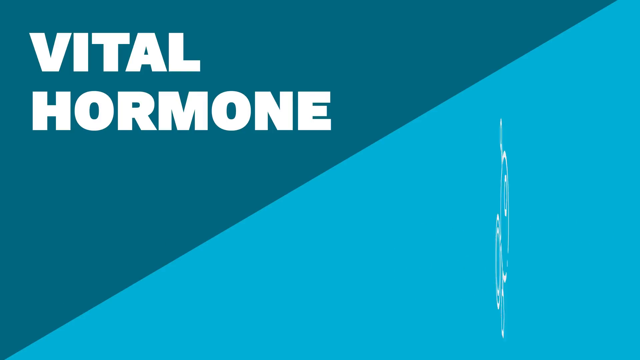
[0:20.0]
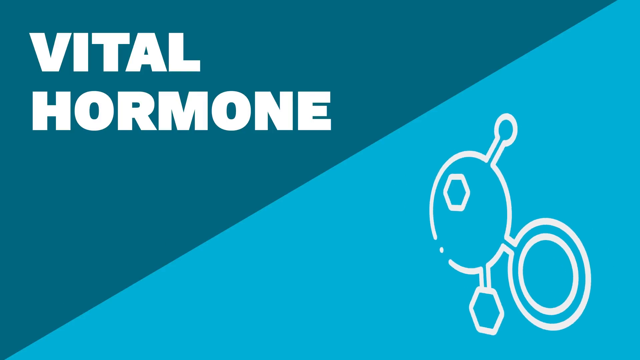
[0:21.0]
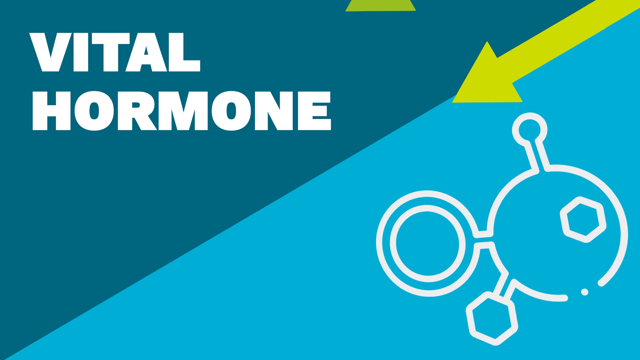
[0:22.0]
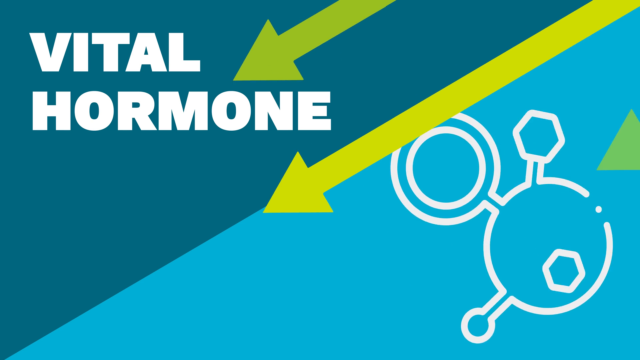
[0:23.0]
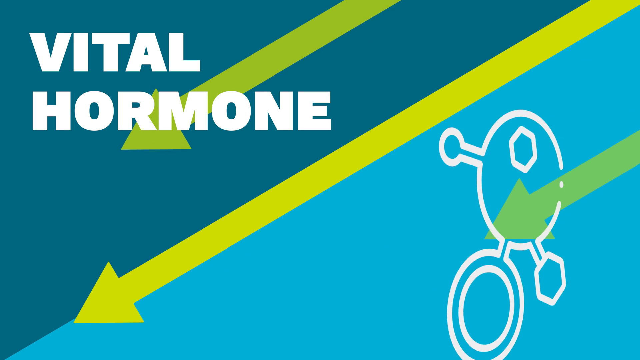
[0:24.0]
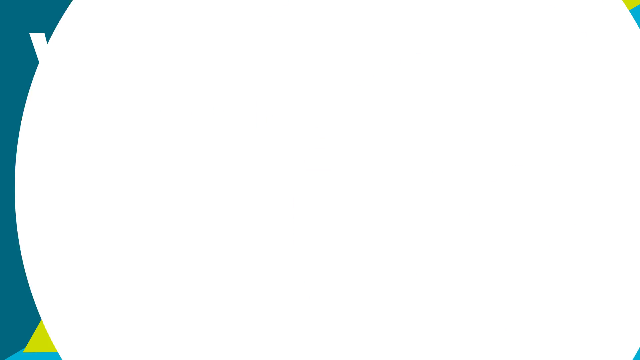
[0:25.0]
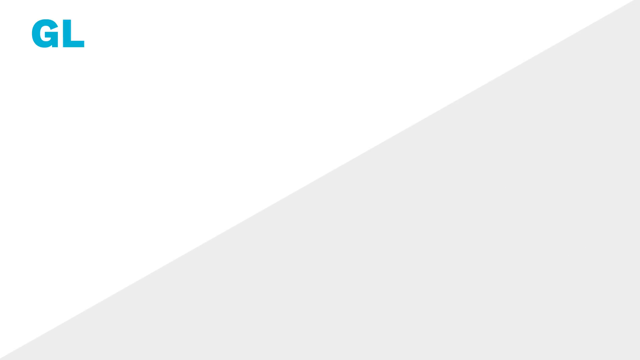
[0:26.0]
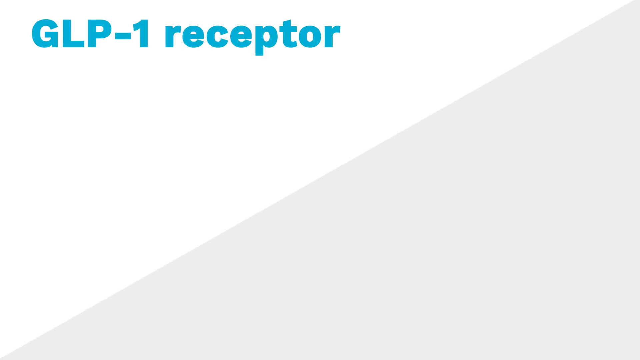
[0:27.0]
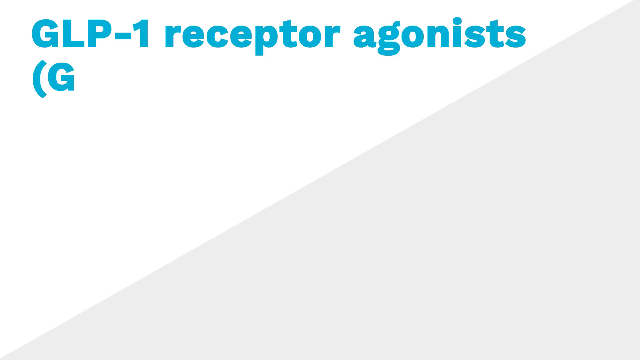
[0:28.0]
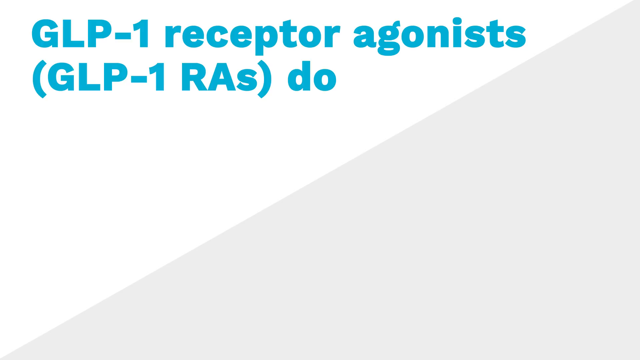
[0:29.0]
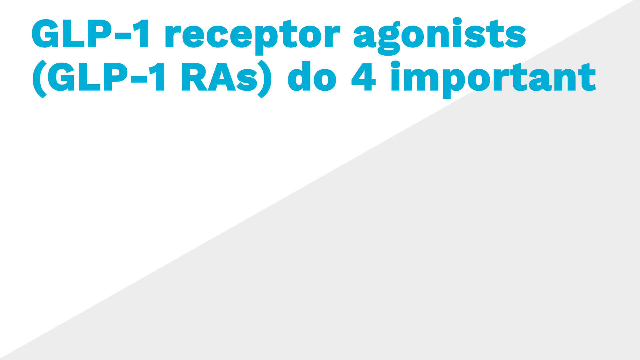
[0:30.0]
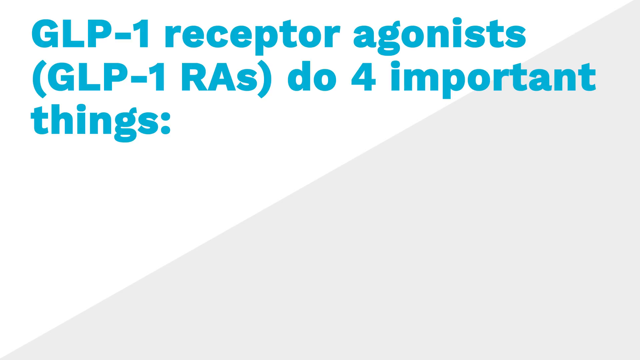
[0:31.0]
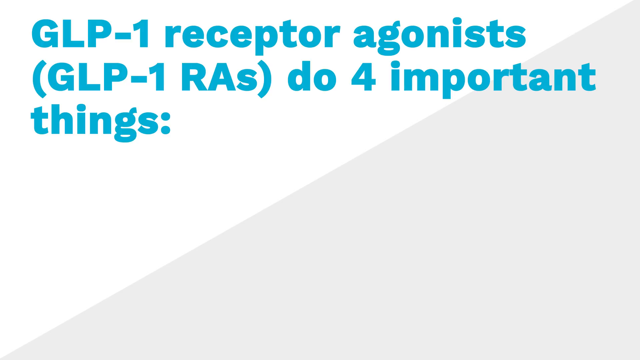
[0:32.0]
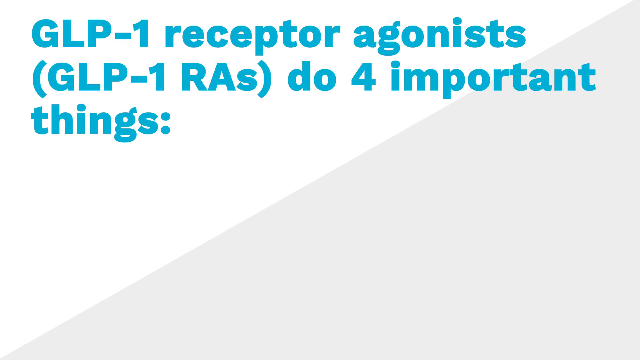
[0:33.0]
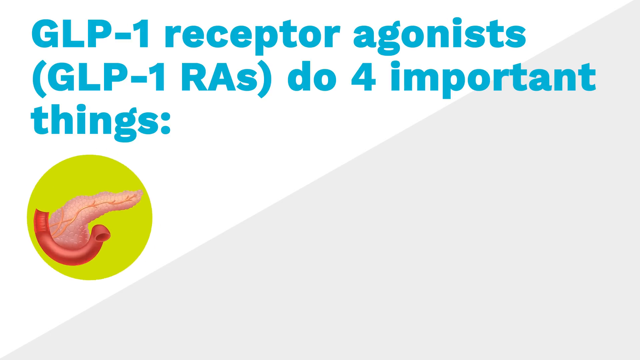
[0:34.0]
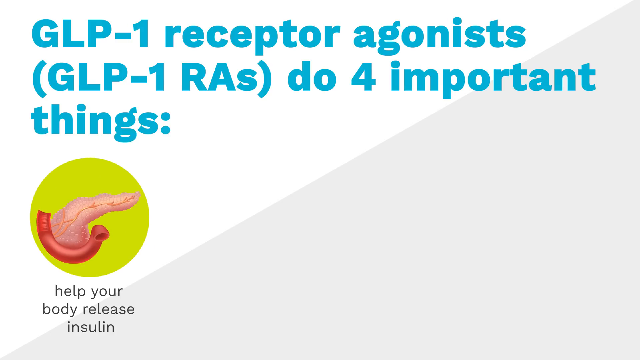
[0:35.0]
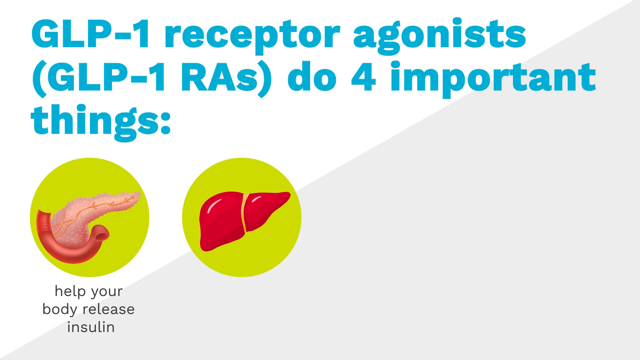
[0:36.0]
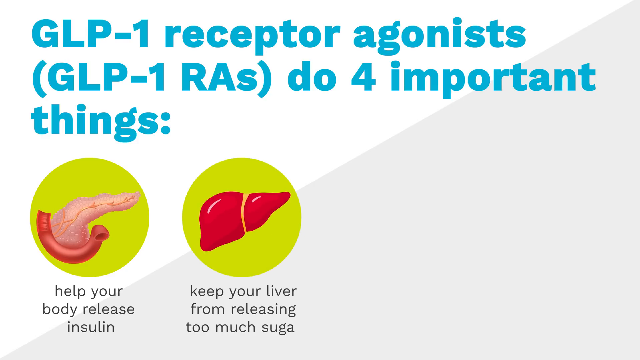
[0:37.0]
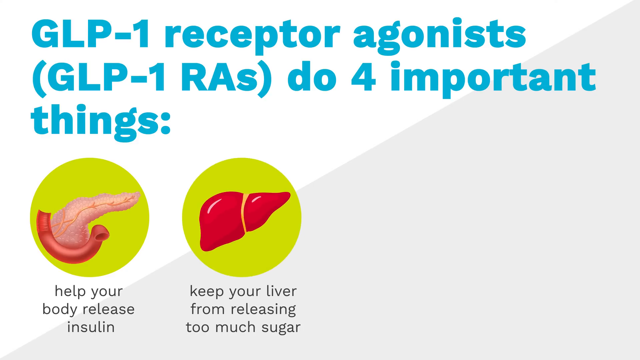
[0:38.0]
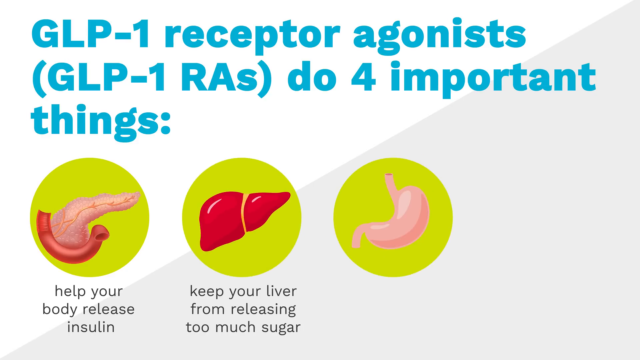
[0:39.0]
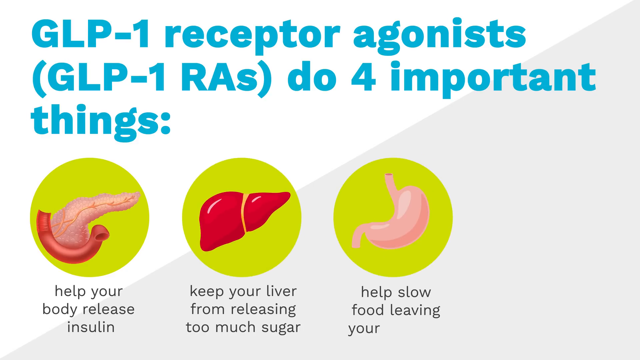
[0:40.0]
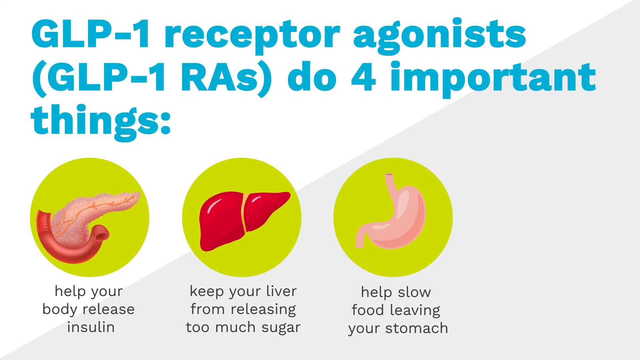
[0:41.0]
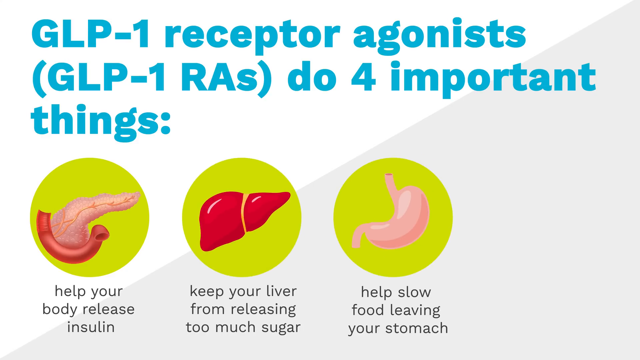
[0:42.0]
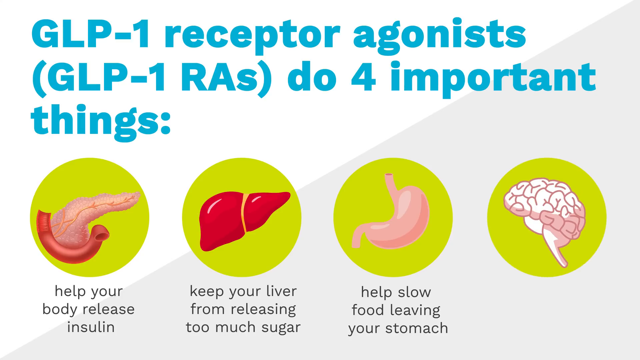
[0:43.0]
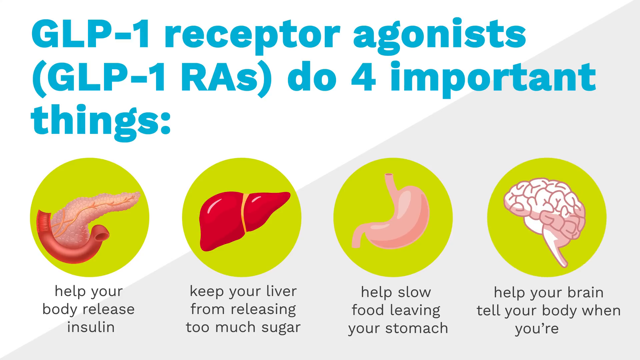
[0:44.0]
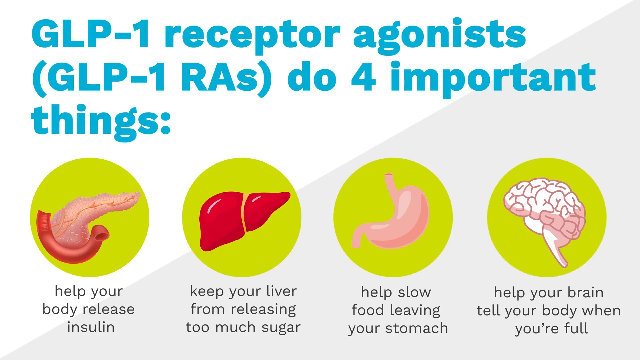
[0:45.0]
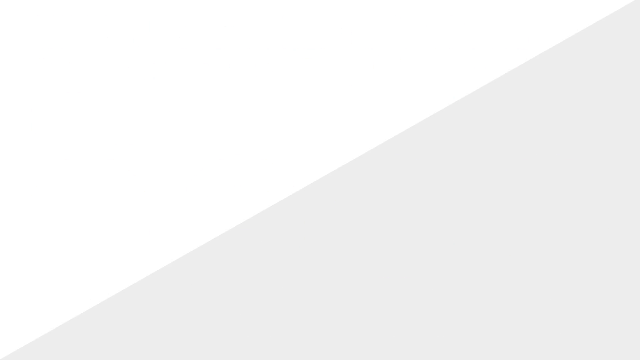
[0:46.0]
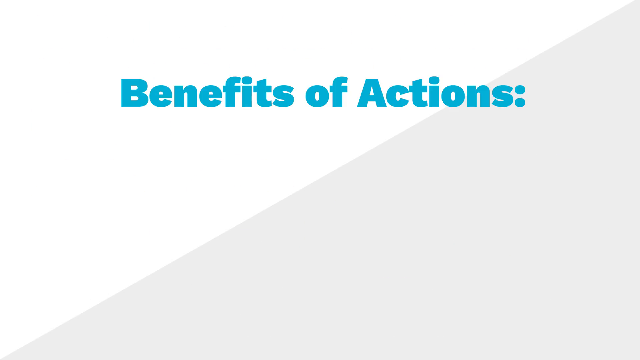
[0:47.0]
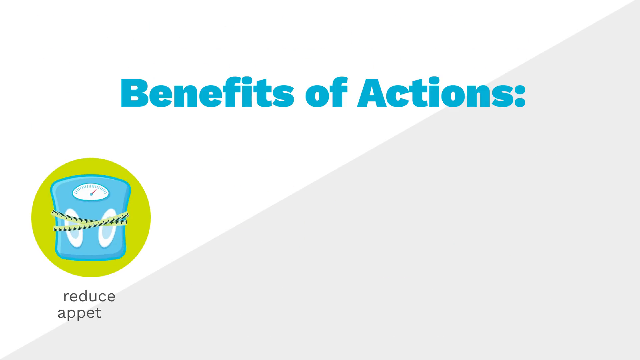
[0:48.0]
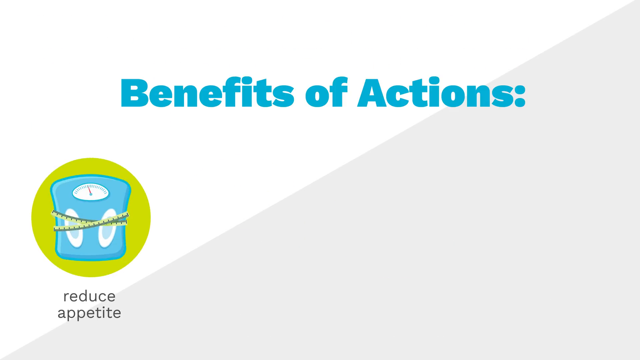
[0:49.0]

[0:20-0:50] The "vital hormone" slide is followed by animated yellow and green arrows that point from top right to bottom left and appear to move across the screen from right to left. The video then cuts to a slide about GLP-1 receptor agonists, stating that they do four important things: "help your body regulate insulin," "help your liver from releasing too much sugar," "help slow down food," and "help your brain know when it's full." Next come the benefits of these actions, the first two being reducing A1C and reducing weight. This slide also has a diagonal cut, with the lower right gray and the upper left white, and the words "GLP-1 receptor" in what seems to be a teal color.